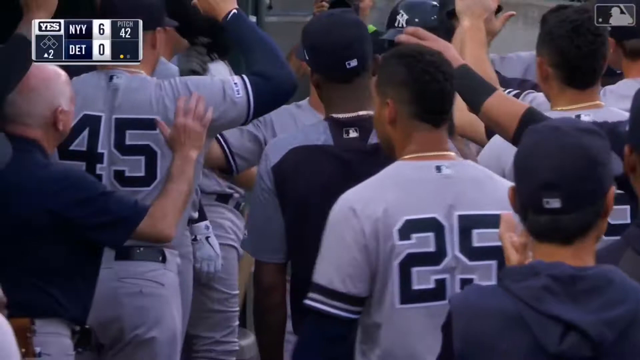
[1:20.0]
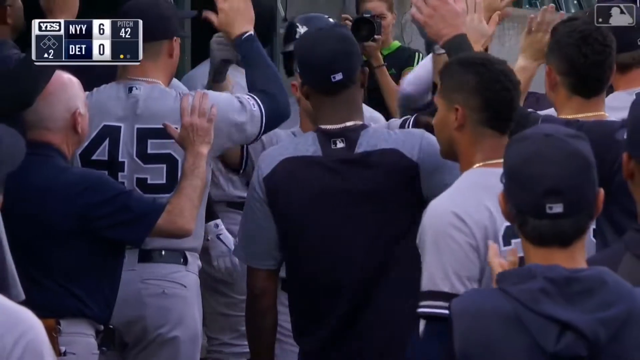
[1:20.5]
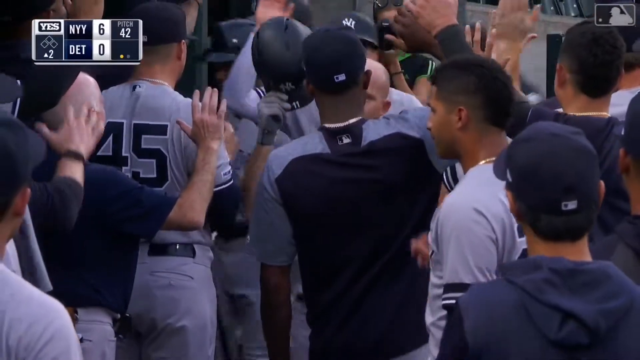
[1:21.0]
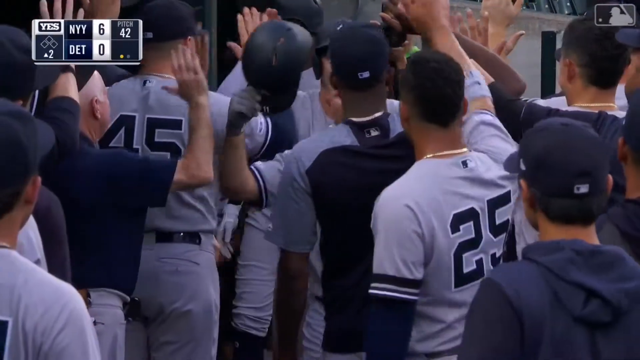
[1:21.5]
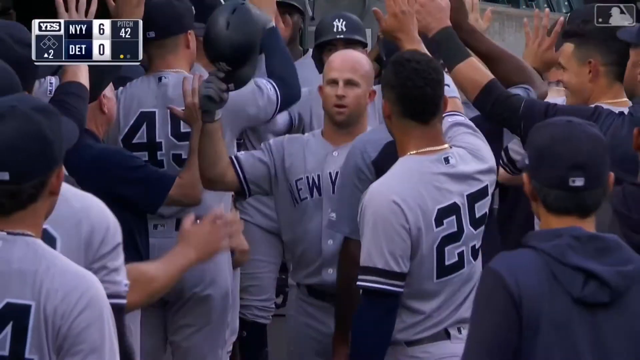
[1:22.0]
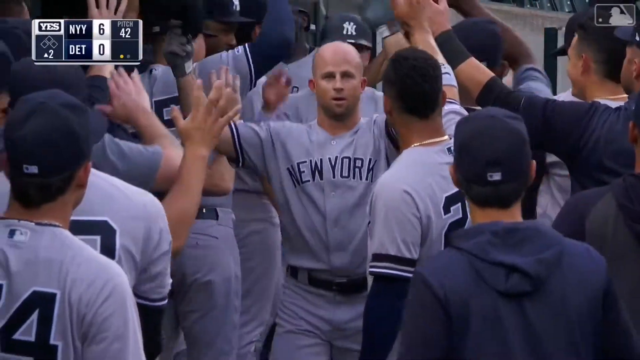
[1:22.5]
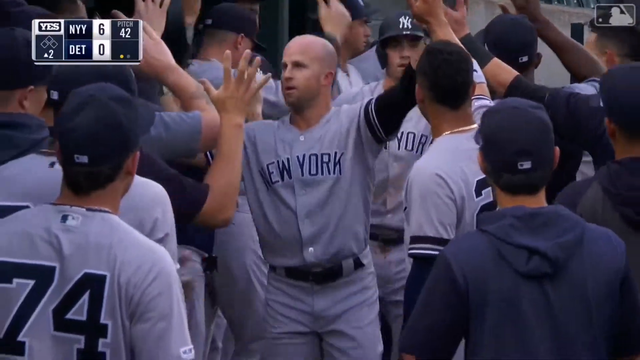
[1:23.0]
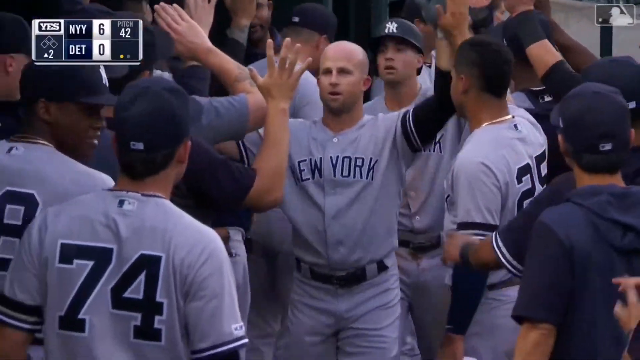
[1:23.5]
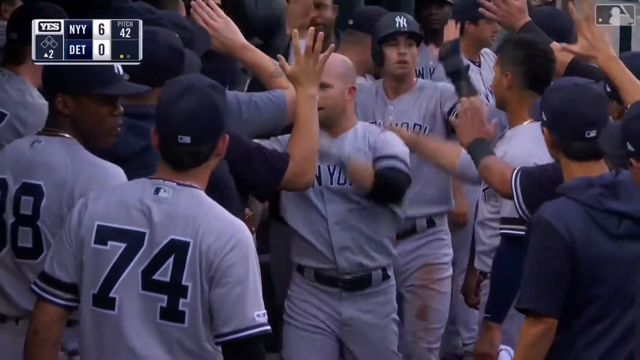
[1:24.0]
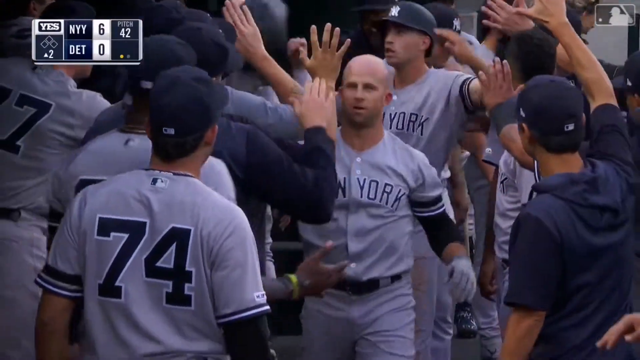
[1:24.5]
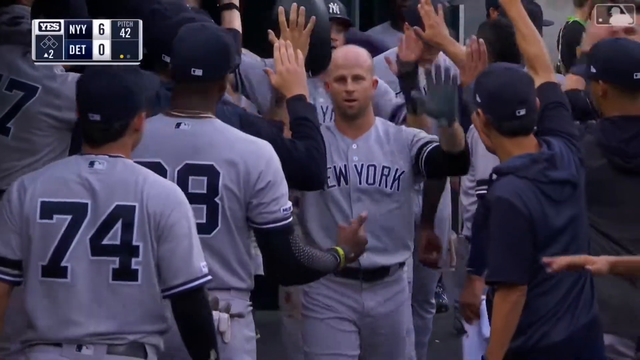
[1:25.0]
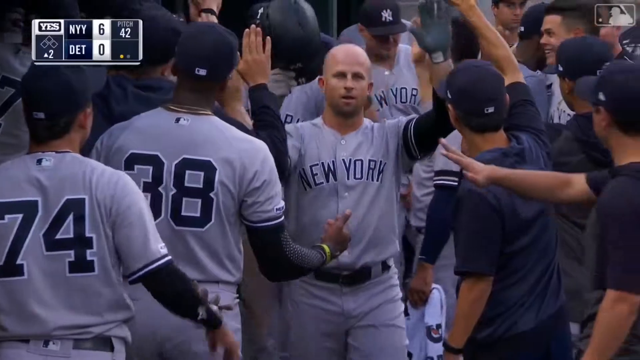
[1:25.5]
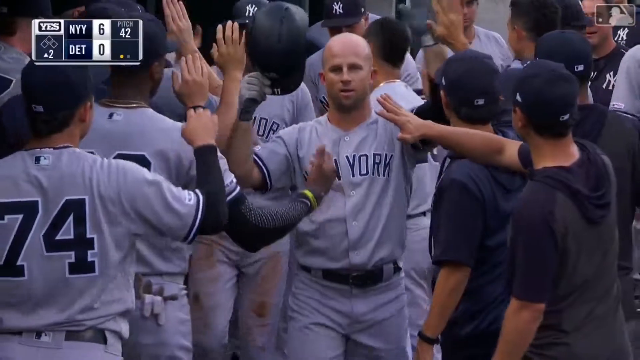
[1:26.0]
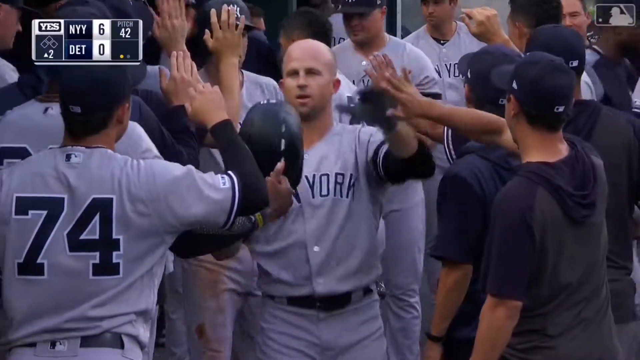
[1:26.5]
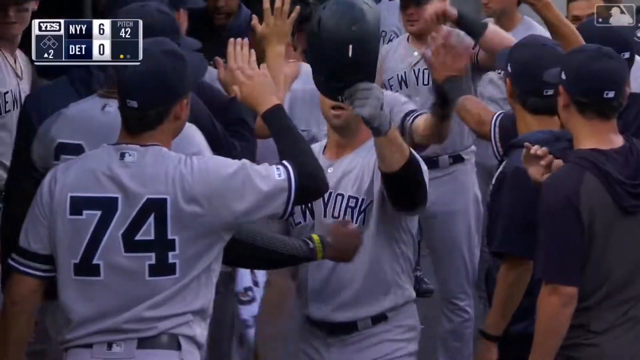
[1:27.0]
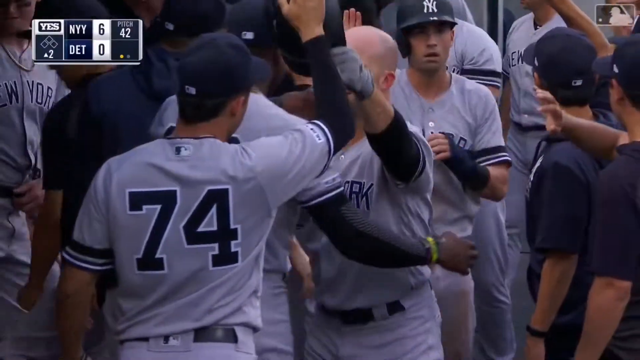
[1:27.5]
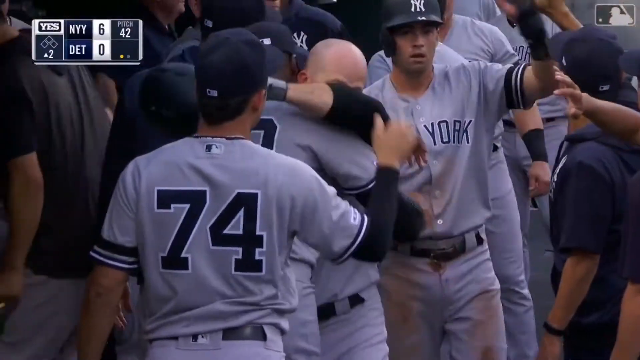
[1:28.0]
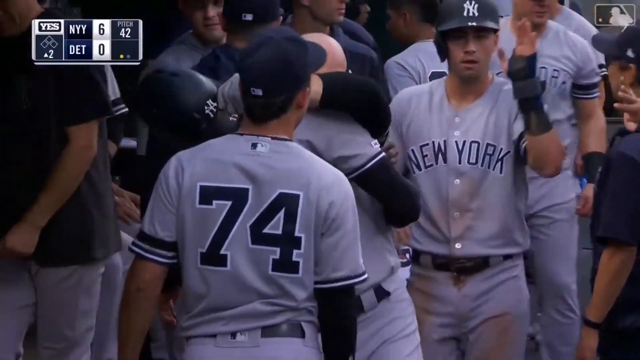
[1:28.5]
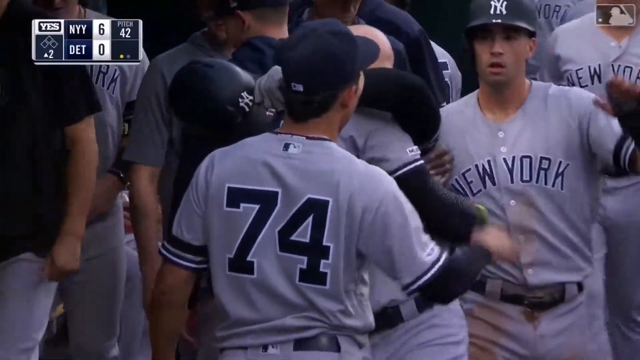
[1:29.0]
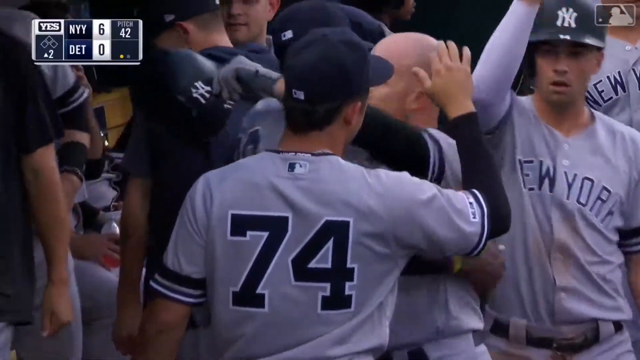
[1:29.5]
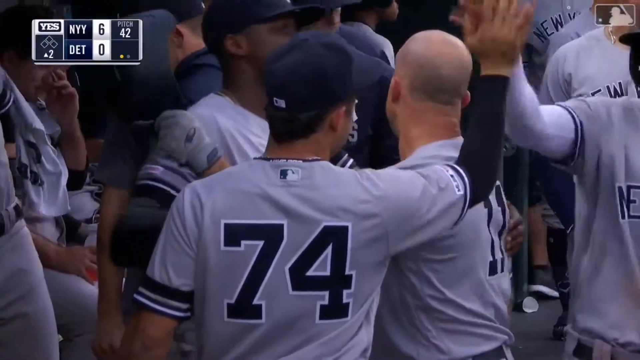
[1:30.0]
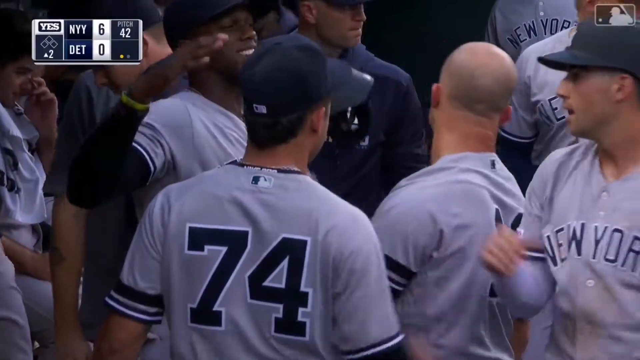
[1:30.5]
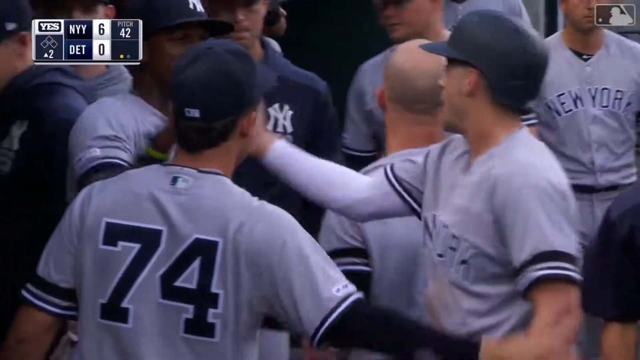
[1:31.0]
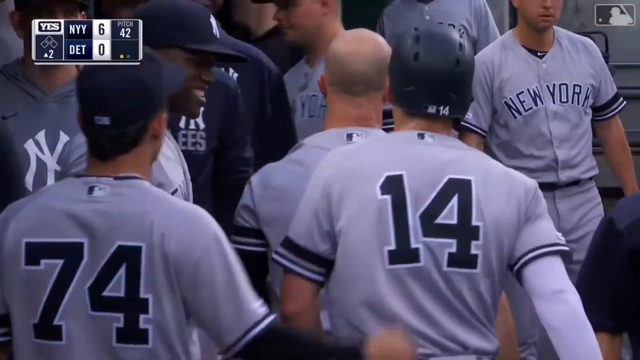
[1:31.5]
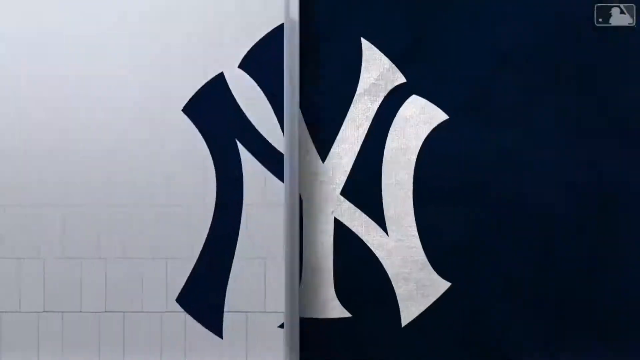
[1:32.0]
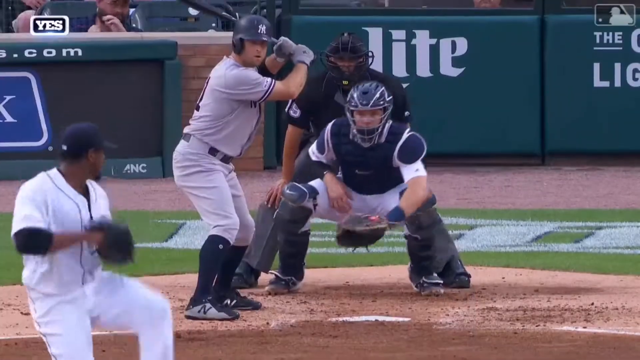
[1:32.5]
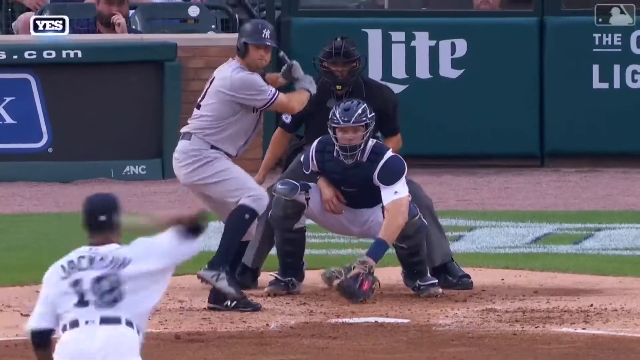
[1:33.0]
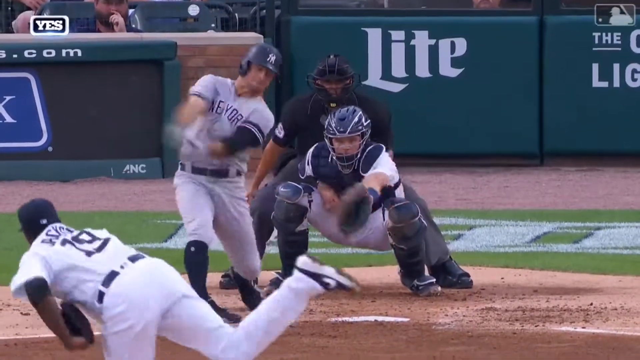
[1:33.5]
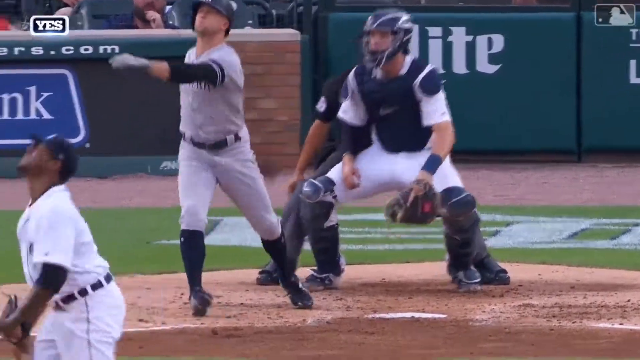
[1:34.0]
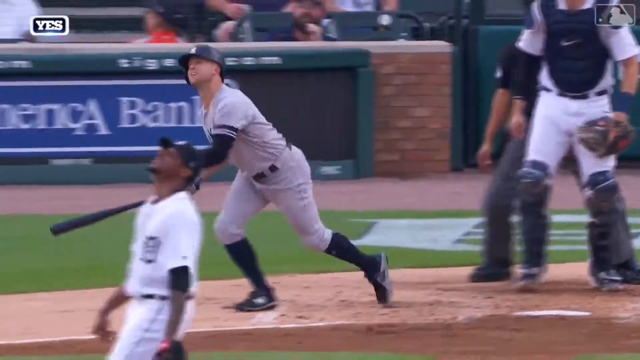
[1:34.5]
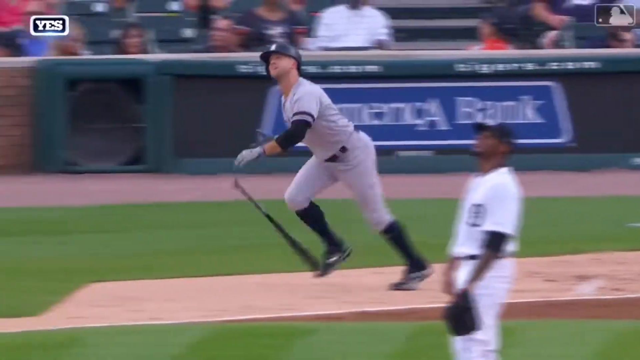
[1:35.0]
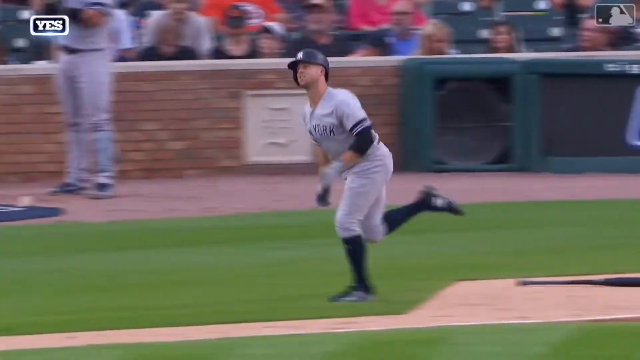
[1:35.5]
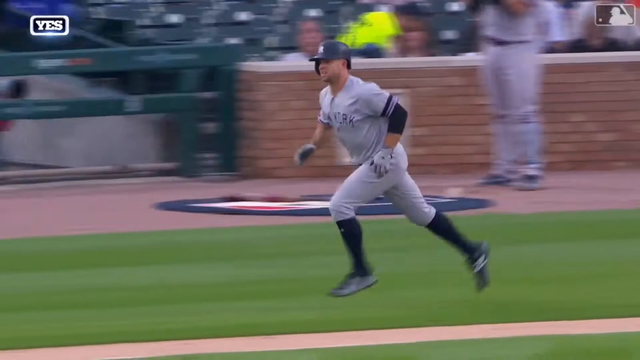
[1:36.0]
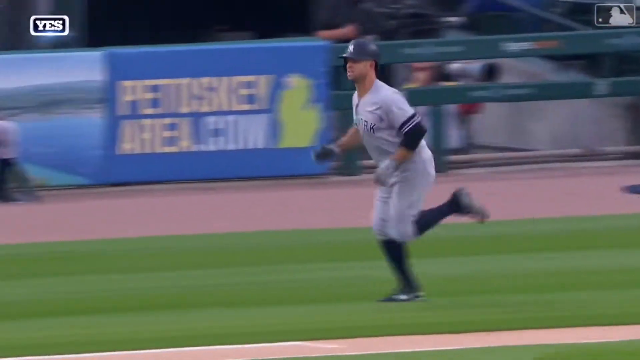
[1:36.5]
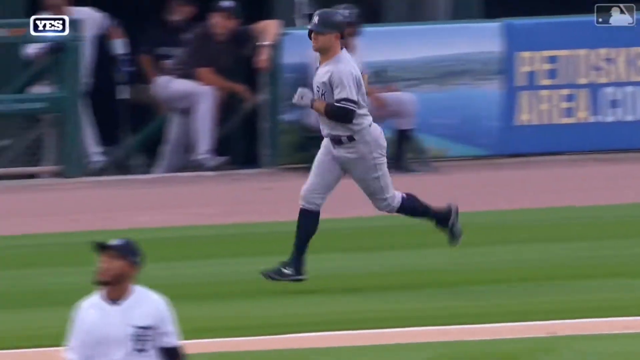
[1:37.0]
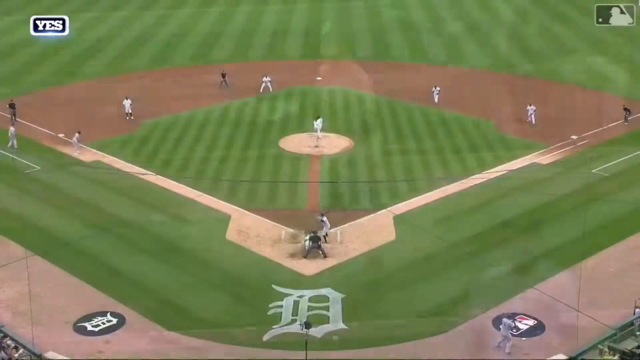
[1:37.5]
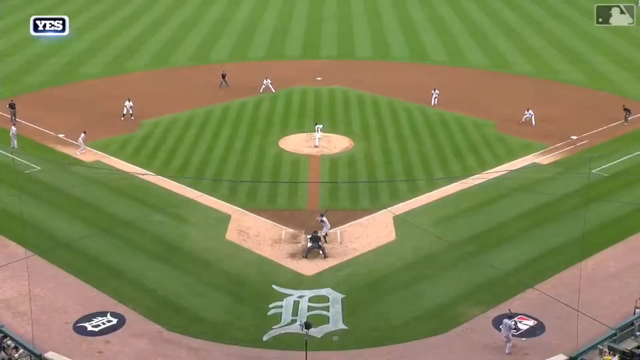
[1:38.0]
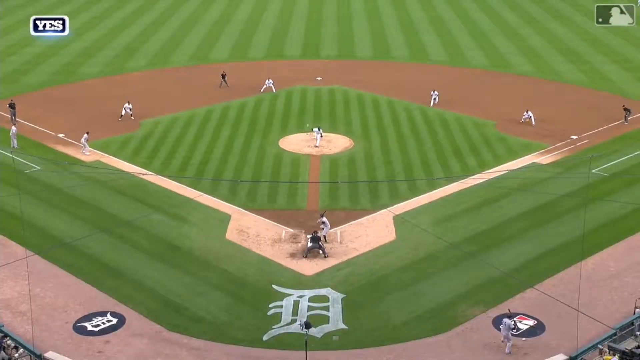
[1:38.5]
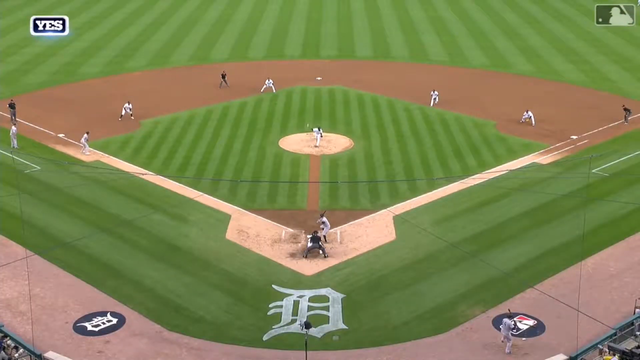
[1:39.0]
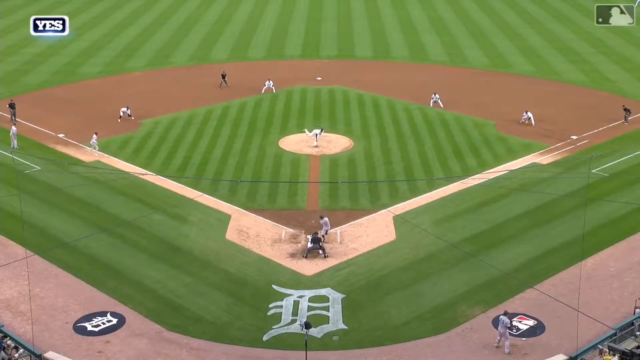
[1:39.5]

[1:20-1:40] Many teammates in their batting or bench area give each other high fives. The camera focuses on a bald player who has just taken off his hat. The scoreboard on the left shows "NYY" with 6 and "DET", most likely with 0, and it seems to be the second inning. The bald player has both hands up, left and right, high-fiving every teammate in the bench area, and they seem to be cheering passionately. One of the players taps the helmet of the player who hit the home run, and the bald man gives another player a warm hug. The video then seems to show a replay, in which the player who hit the home run drops his bat and starts jogging.